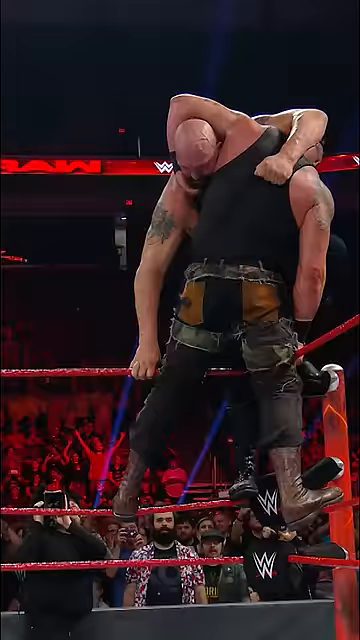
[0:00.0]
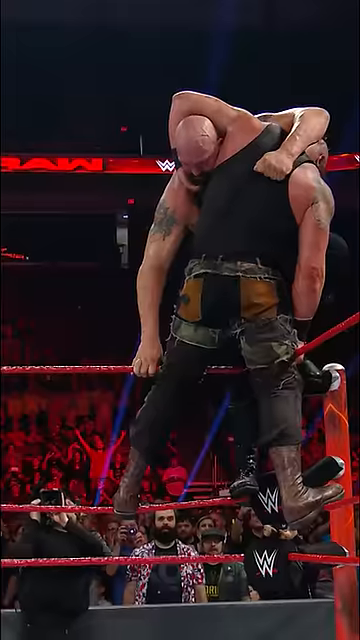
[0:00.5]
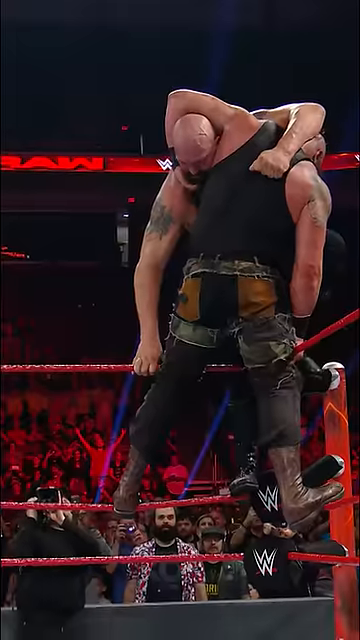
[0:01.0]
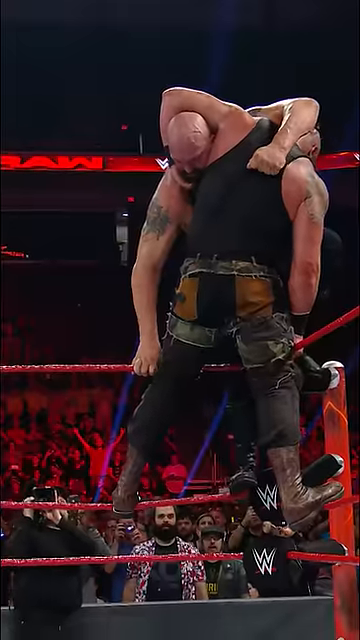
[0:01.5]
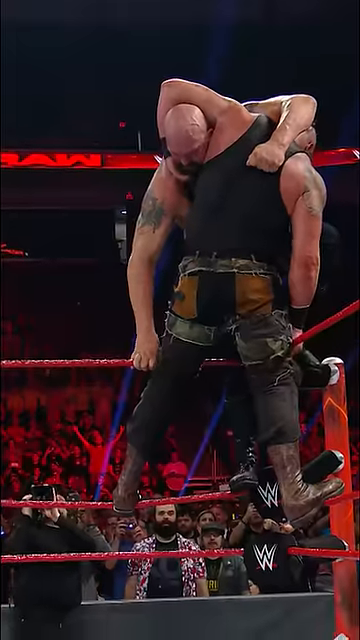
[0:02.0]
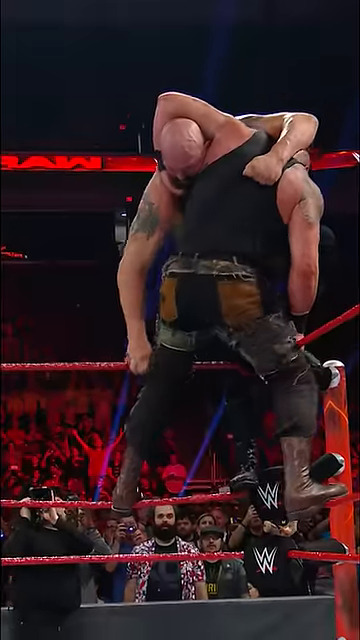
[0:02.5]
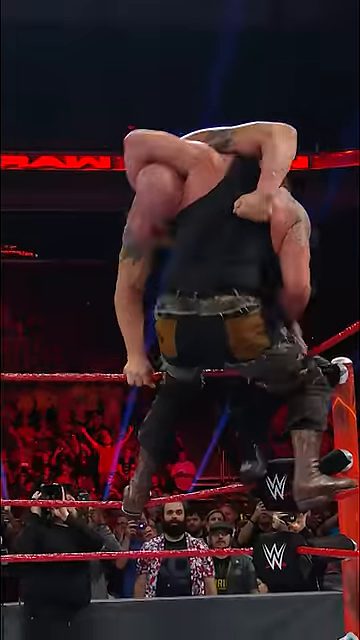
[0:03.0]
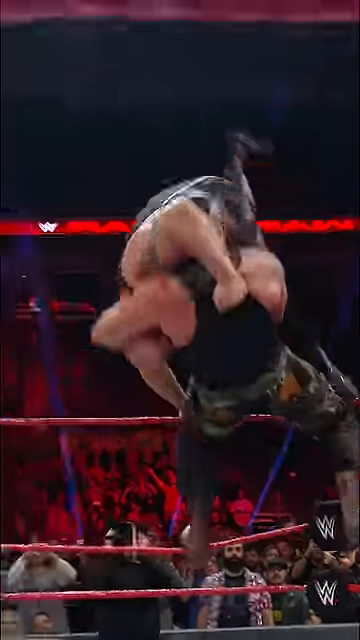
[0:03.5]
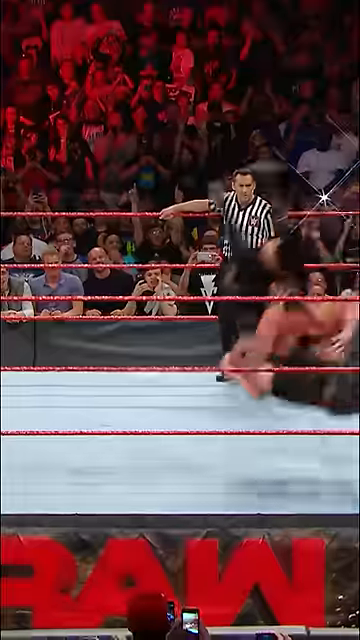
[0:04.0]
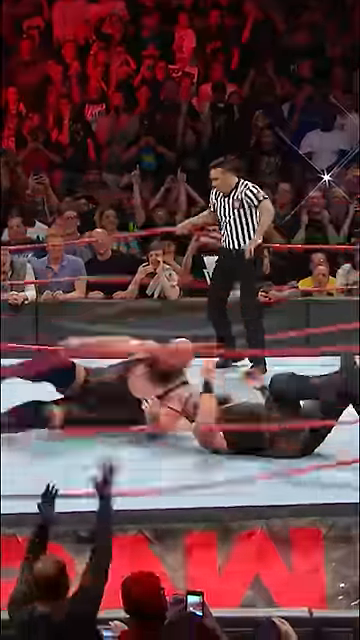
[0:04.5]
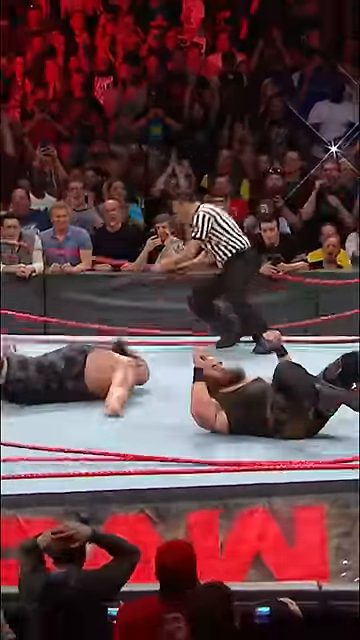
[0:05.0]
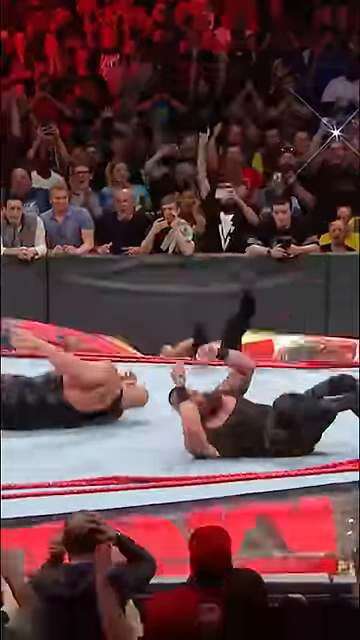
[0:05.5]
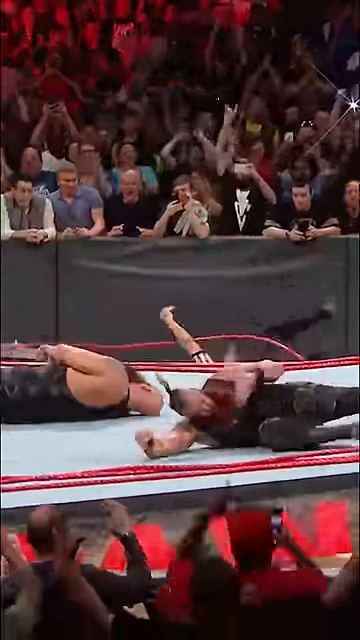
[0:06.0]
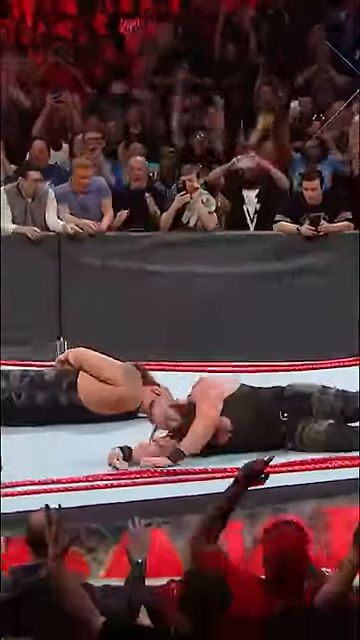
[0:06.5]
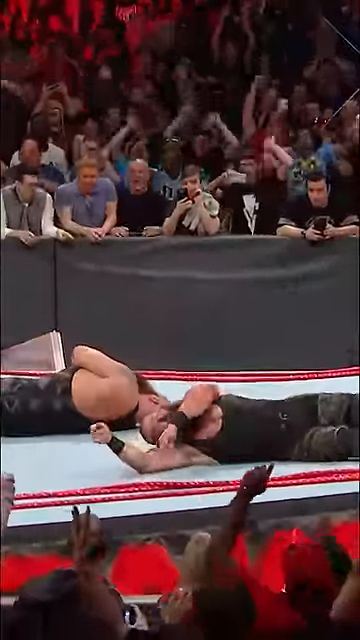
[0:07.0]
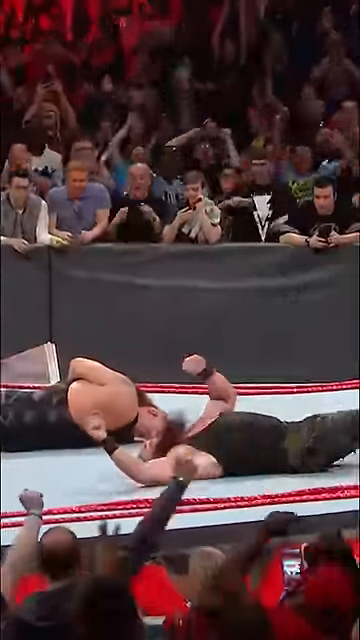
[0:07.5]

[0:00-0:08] Two very large, muscular wrestlers are in a wrestling ring. One wears a black tank top with cargo pants and brown leather boots; the other is bald with a tattoo. At the start, one wrestler is standing on the red ropes around the ring, holding the other wrestler by the neck with his arm, while the other wrestler has his arm on his shoulder. The wrestler facing away from the camera kind of jumps, pulls the other wrestler toward the ground, and flips him over onto his back. The entire ring then collapses, and even the referee falls down and out of the ring. Everyone in the audience celebrates afterward. Both wrestlers lie on the ground, looking a little like they are in pain.